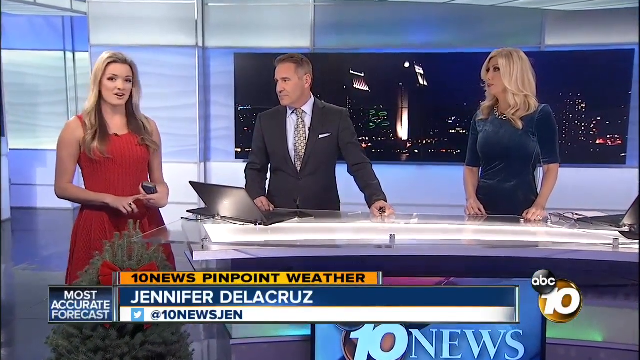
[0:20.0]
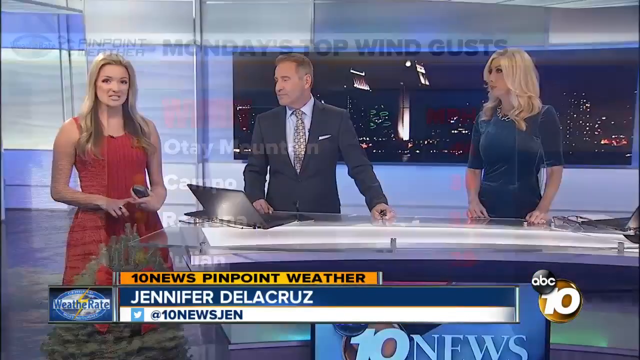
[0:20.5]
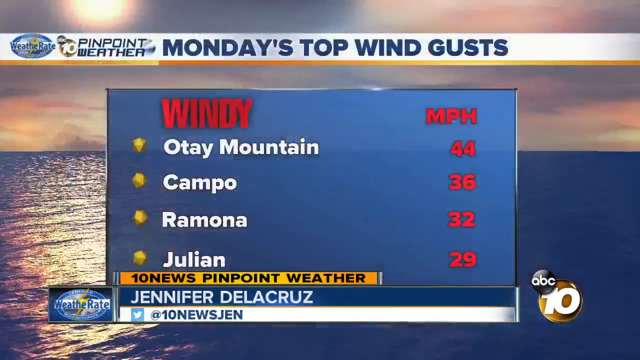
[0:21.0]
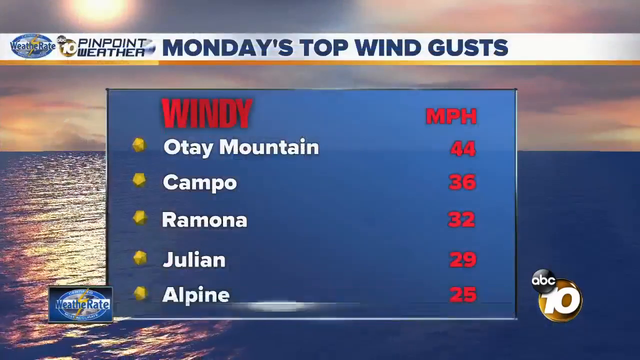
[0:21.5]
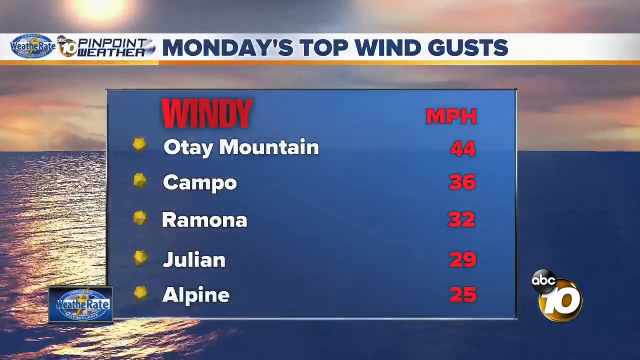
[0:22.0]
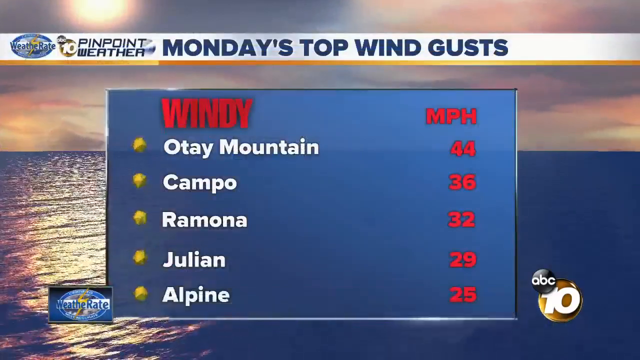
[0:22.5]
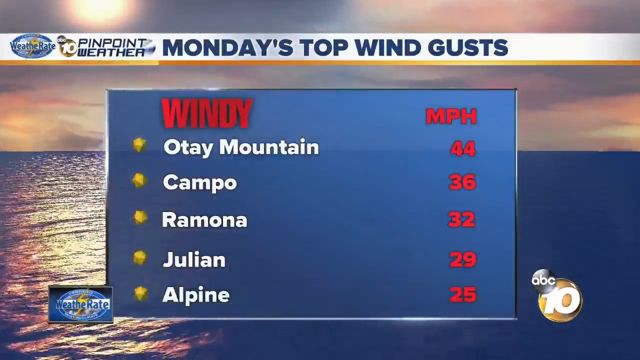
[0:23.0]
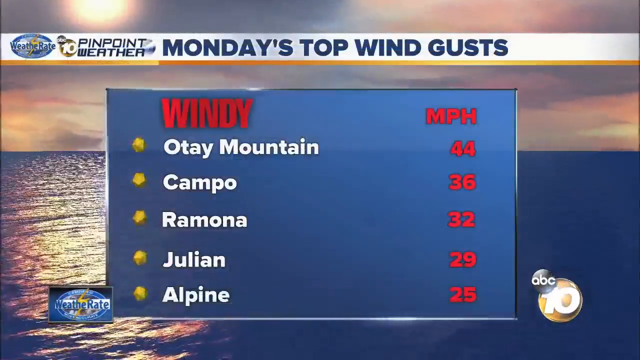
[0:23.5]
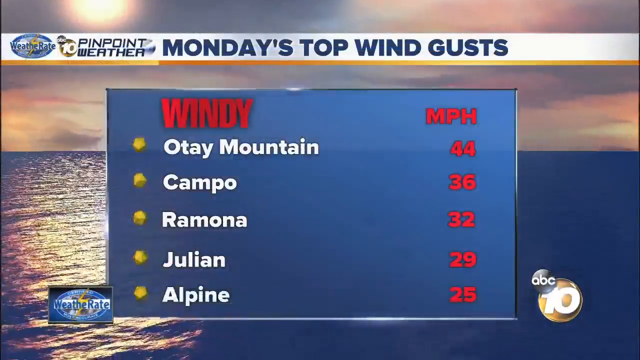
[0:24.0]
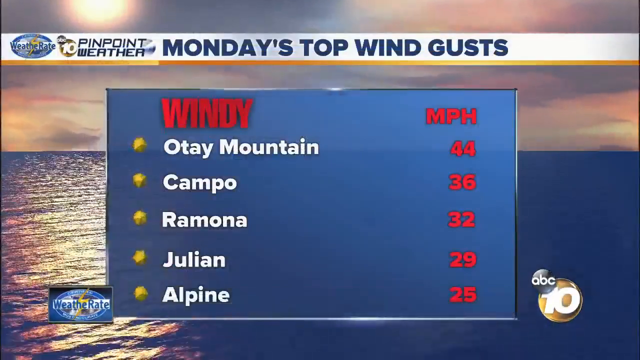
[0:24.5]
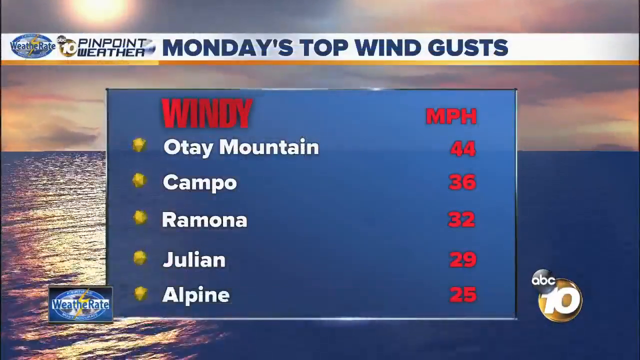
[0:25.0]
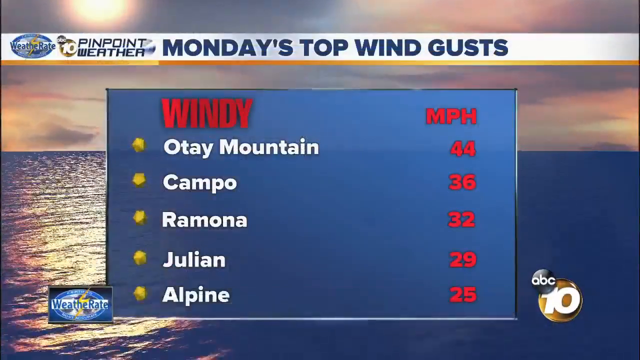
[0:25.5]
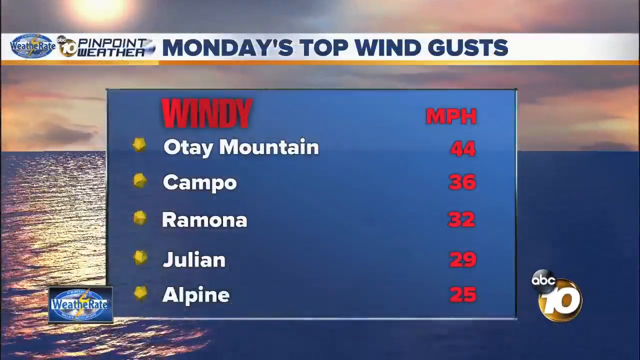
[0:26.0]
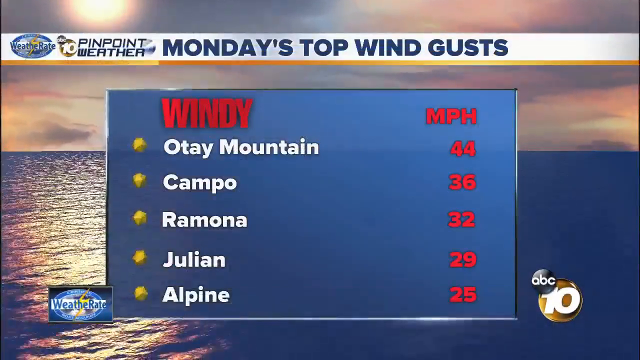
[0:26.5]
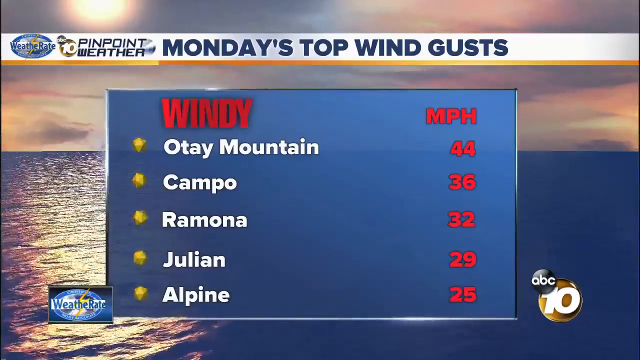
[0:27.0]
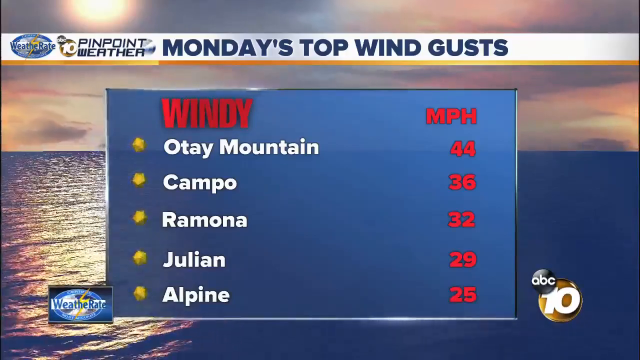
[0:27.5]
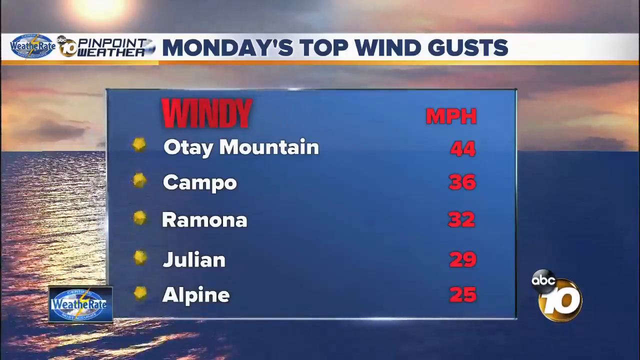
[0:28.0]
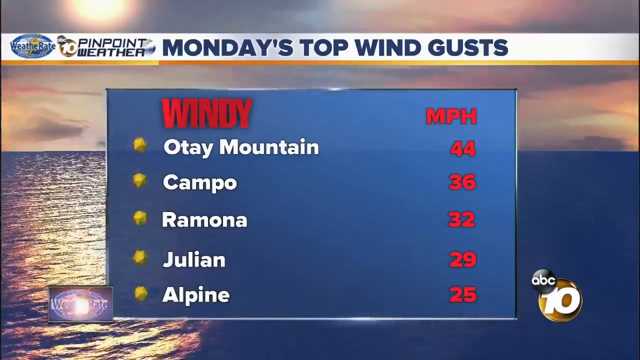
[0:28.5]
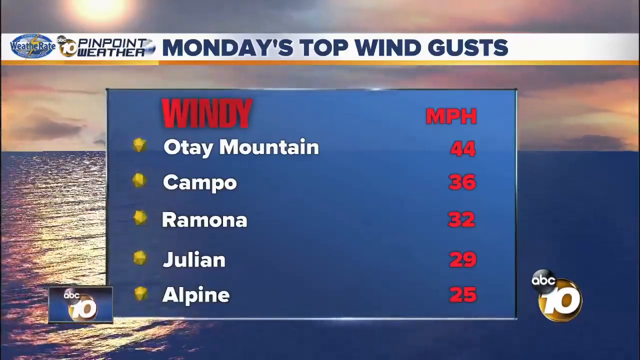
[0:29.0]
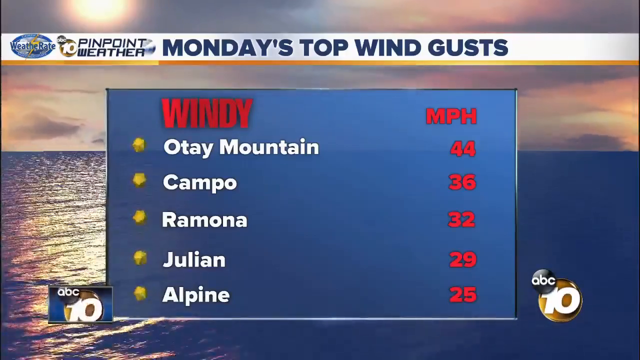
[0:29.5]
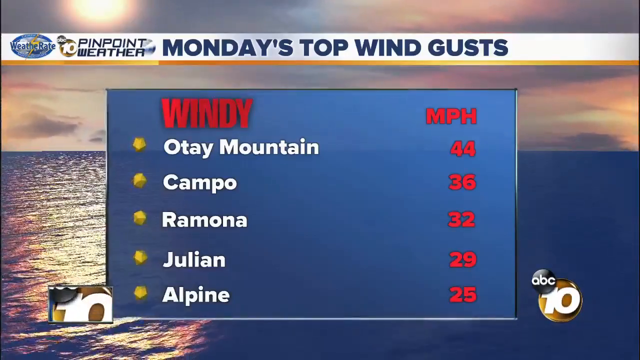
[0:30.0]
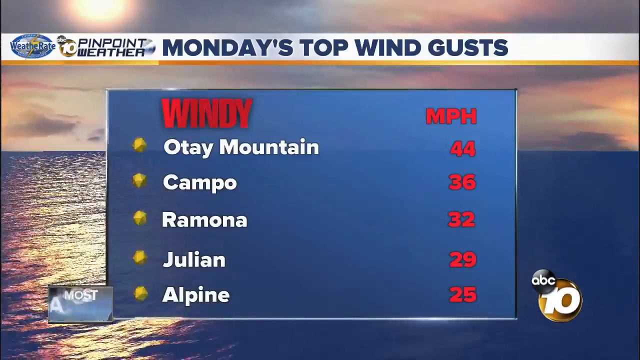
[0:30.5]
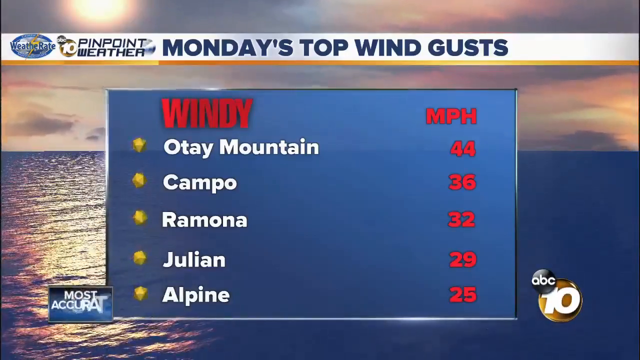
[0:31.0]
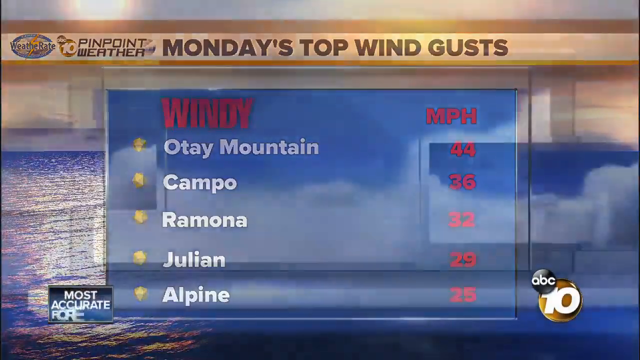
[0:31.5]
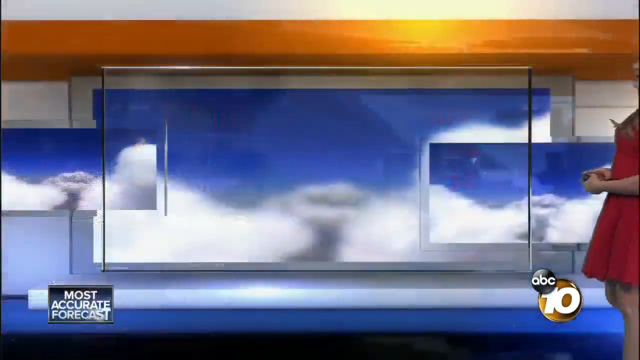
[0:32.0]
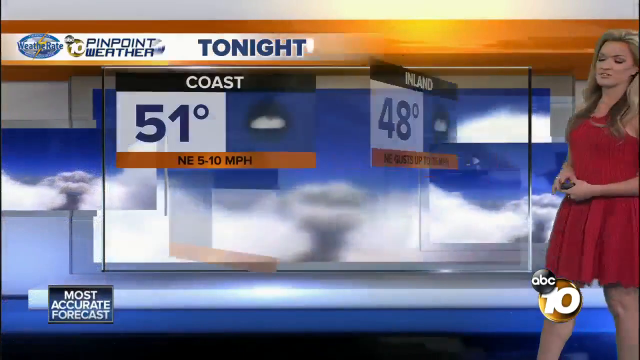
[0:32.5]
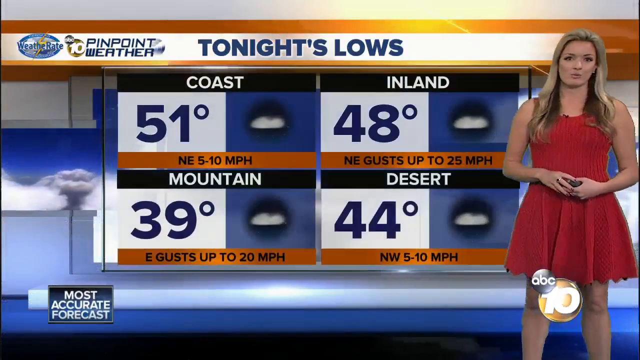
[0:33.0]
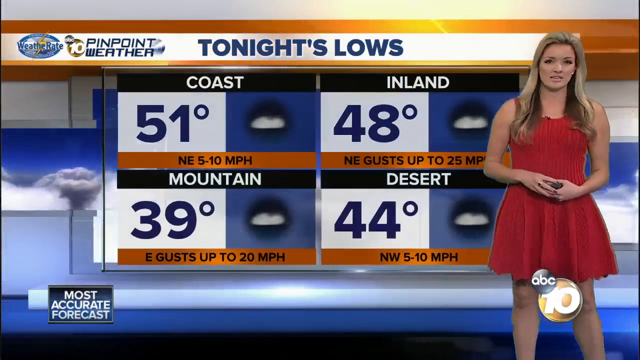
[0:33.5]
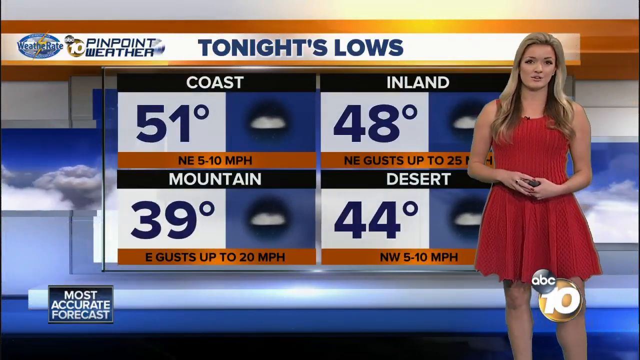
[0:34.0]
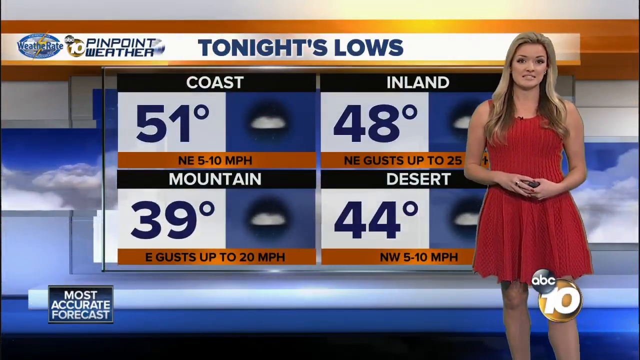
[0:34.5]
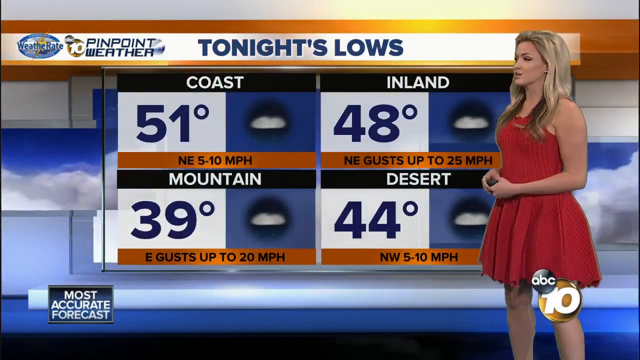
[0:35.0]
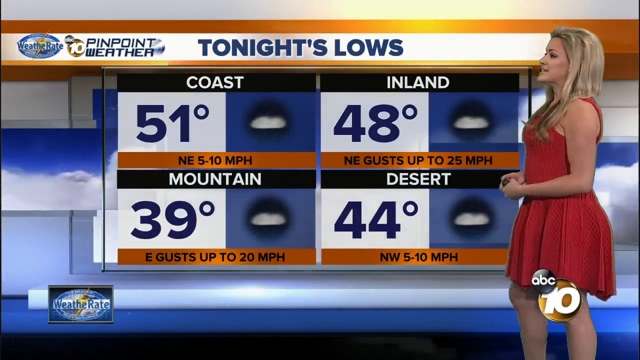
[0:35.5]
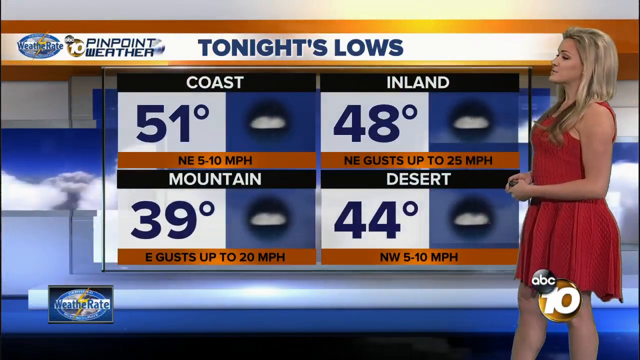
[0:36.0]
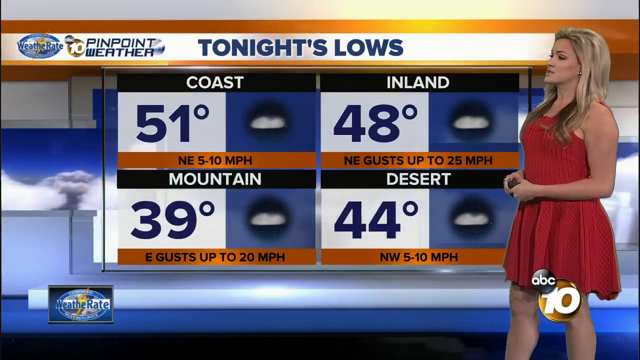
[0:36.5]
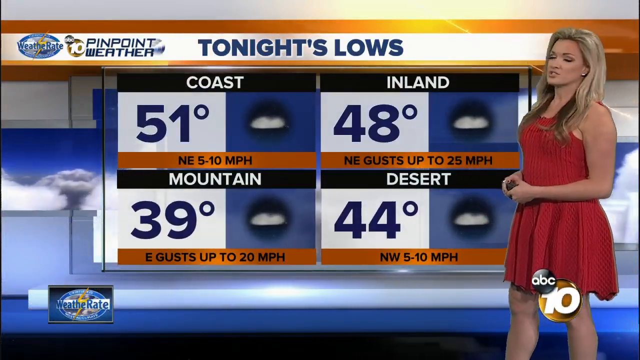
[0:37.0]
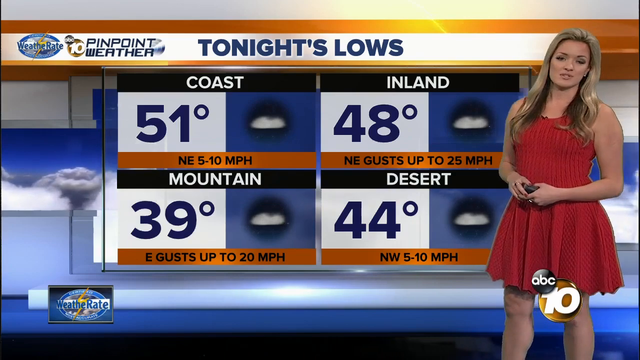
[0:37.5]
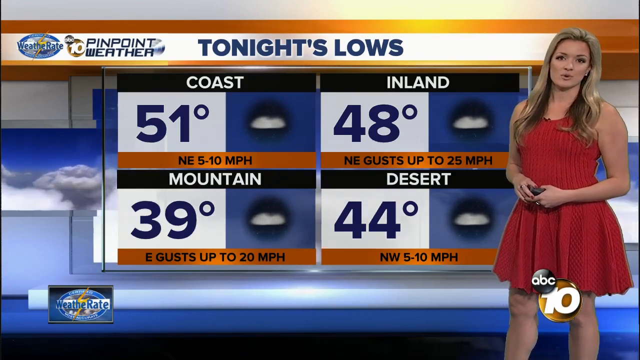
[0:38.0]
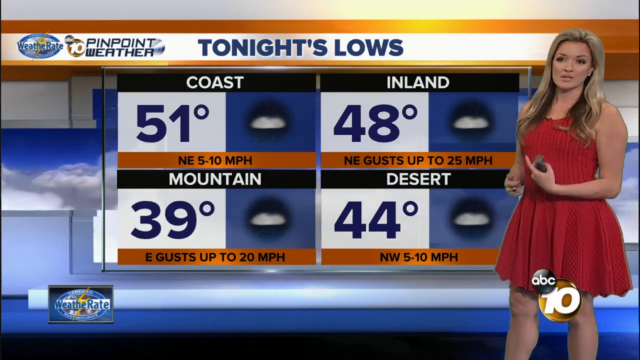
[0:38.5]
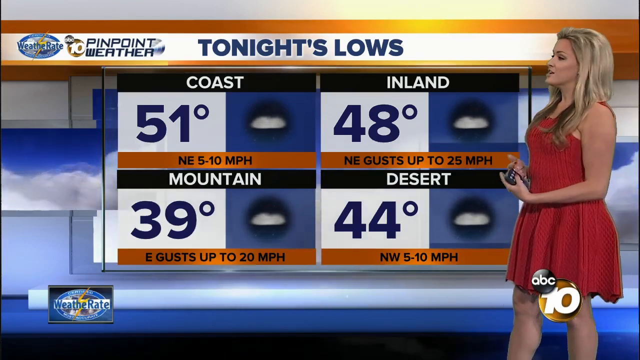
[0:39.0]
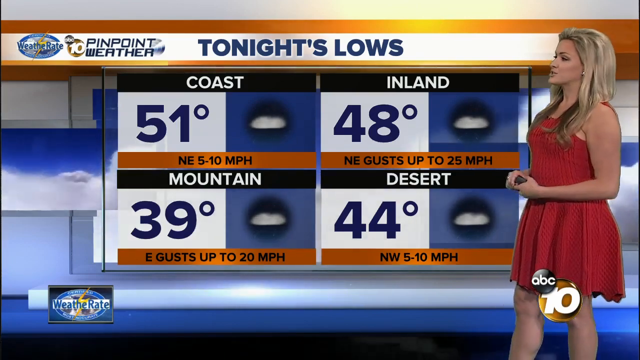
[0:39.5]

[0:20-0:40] A screen titled "Monday's top wind gust" shows "windy" and wind speeds per hour for several places: Oktay Mountain 44, Campbell 36, Ramona 32, Juliana 29 and Alpine 25. Next, a chart of "tonight's lows" shows the coast at 51 degrees, inland at 48, the mountains at 39 and the desert at 44. A lady in a red dress is in front of the chart, explaining it. The segment is labeled pinpoint weather.